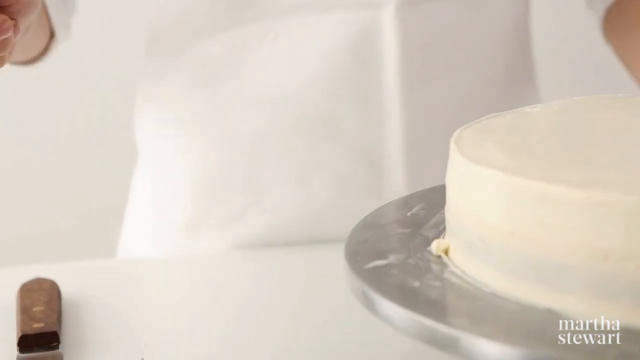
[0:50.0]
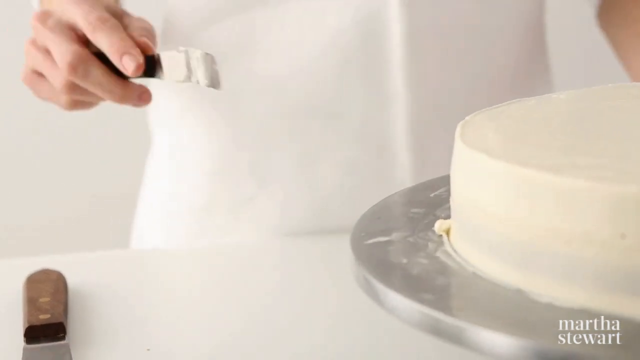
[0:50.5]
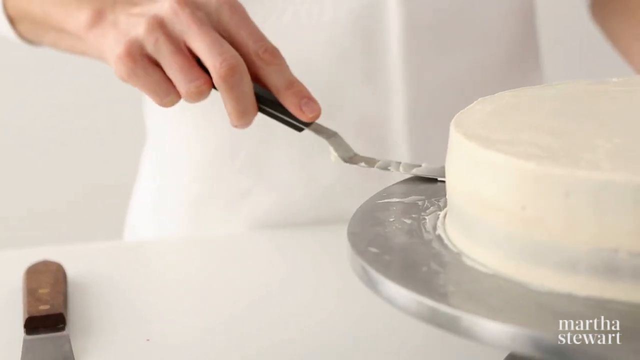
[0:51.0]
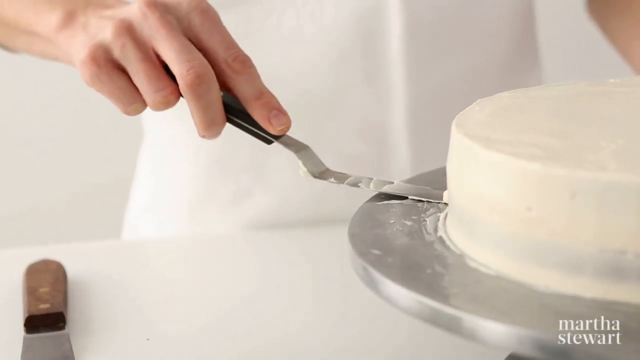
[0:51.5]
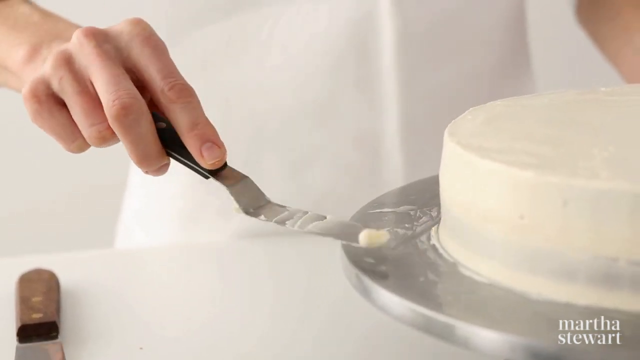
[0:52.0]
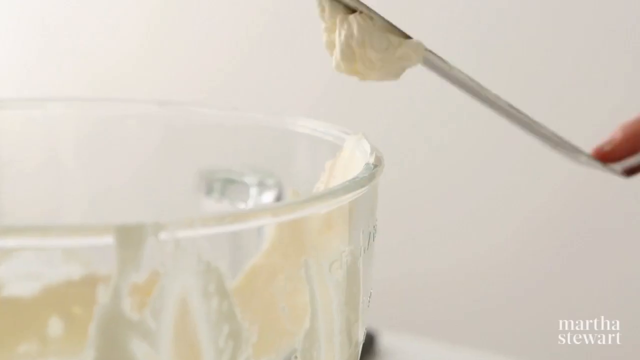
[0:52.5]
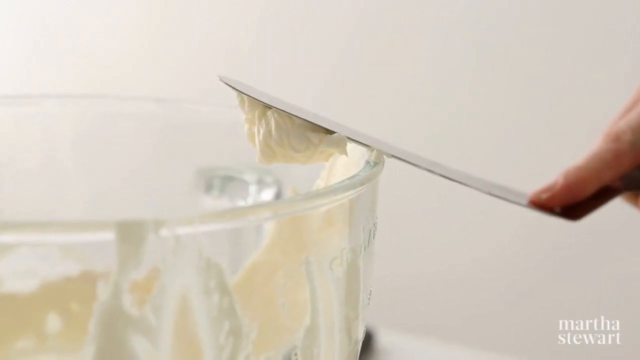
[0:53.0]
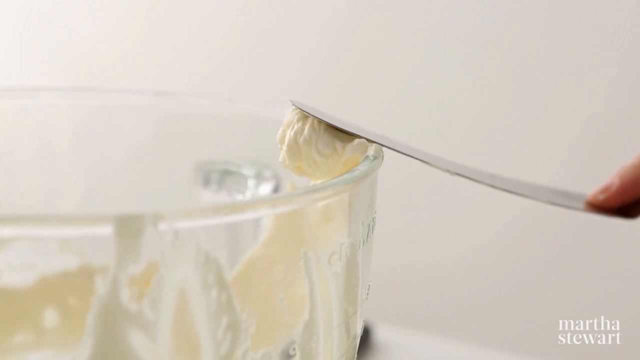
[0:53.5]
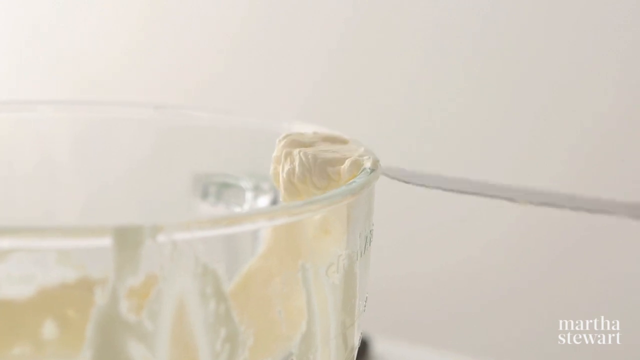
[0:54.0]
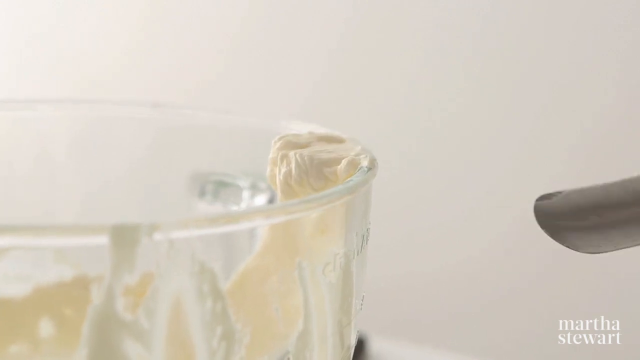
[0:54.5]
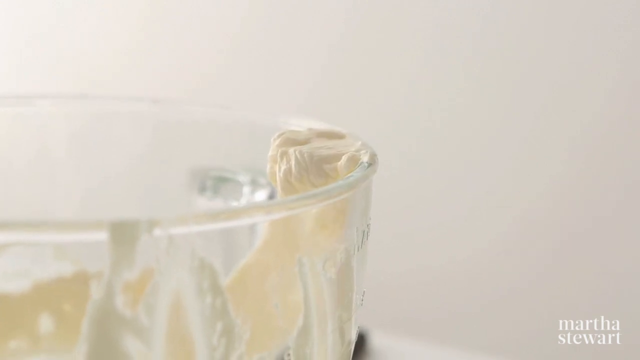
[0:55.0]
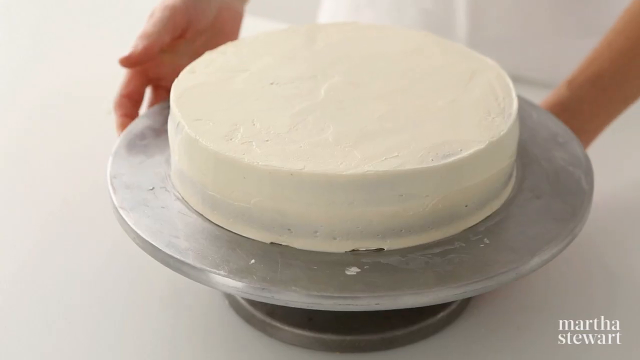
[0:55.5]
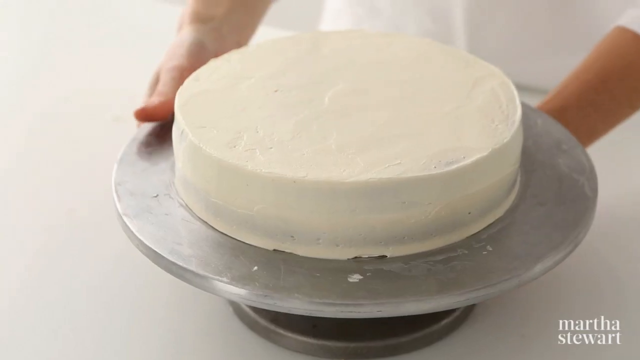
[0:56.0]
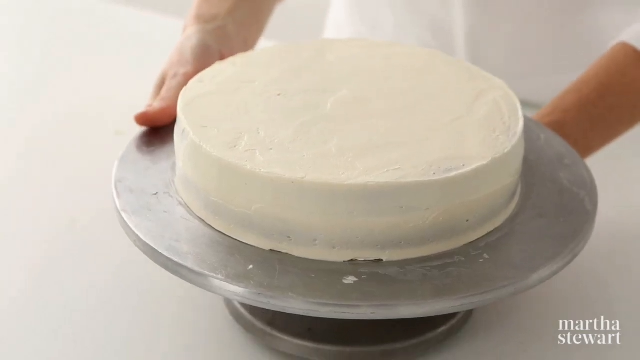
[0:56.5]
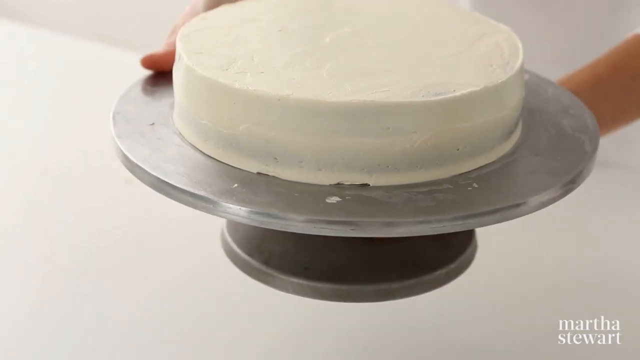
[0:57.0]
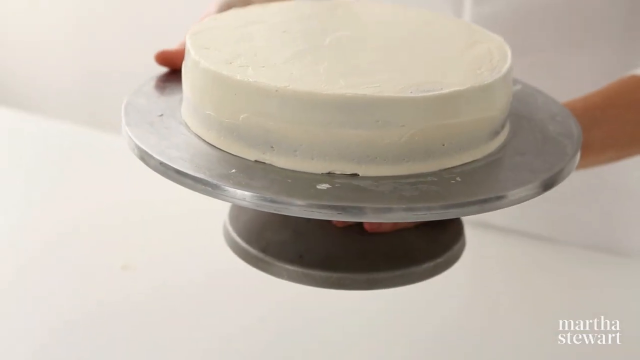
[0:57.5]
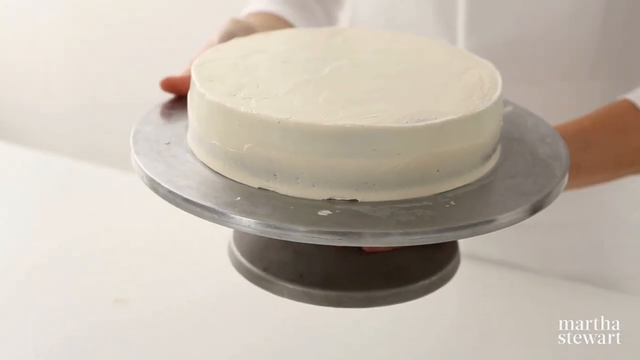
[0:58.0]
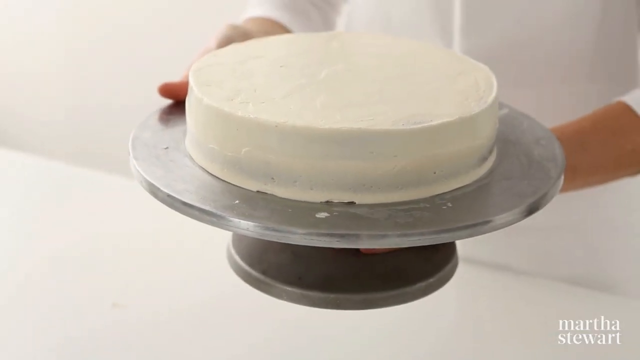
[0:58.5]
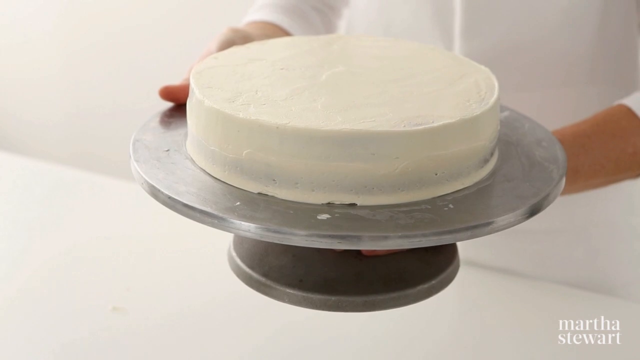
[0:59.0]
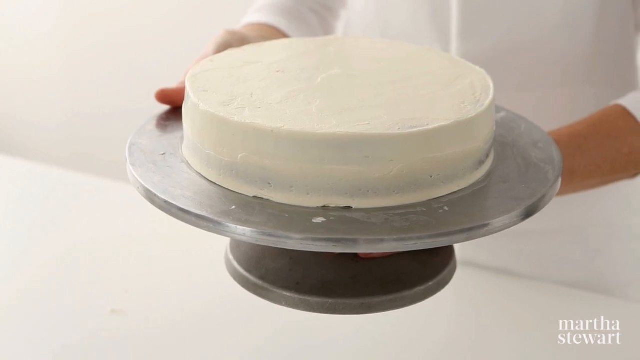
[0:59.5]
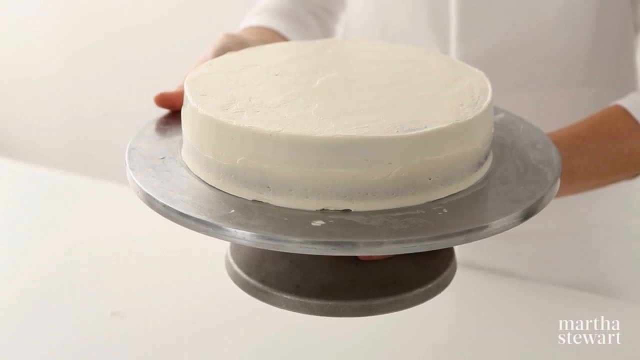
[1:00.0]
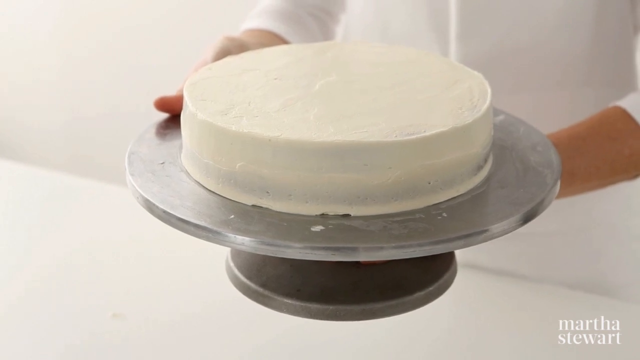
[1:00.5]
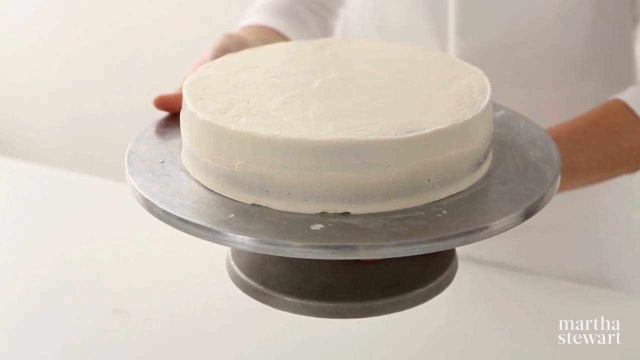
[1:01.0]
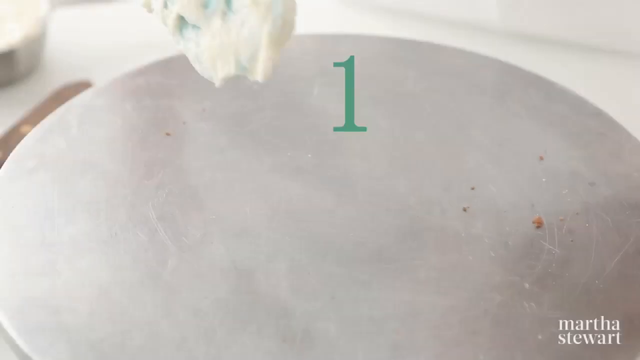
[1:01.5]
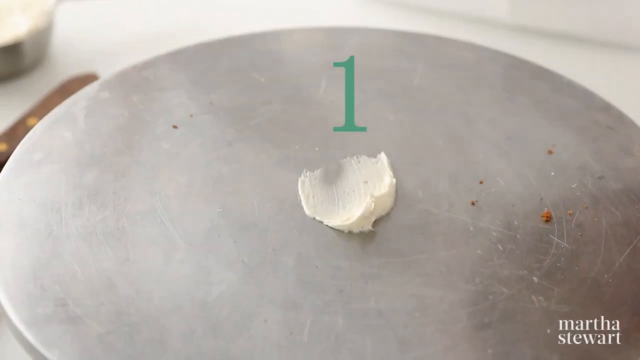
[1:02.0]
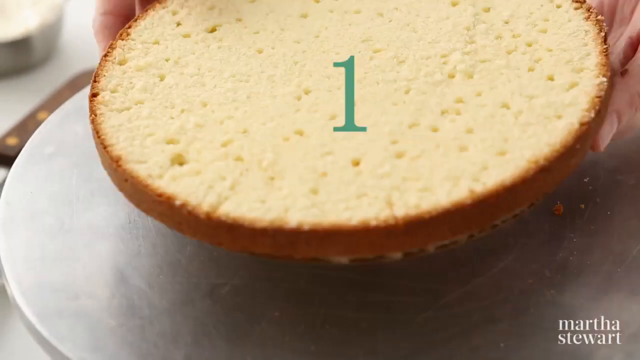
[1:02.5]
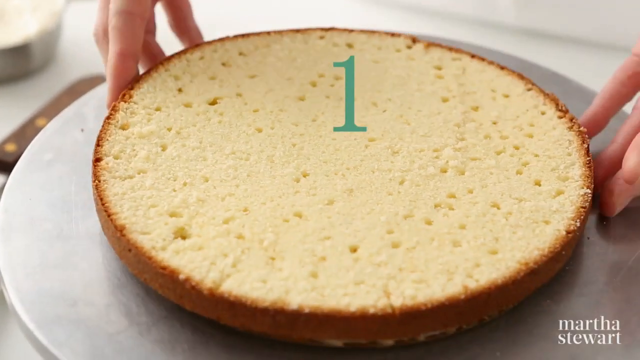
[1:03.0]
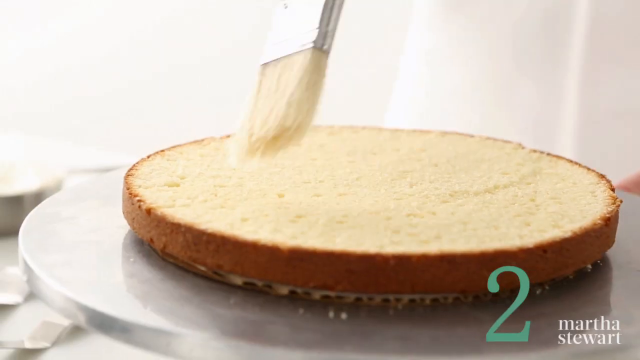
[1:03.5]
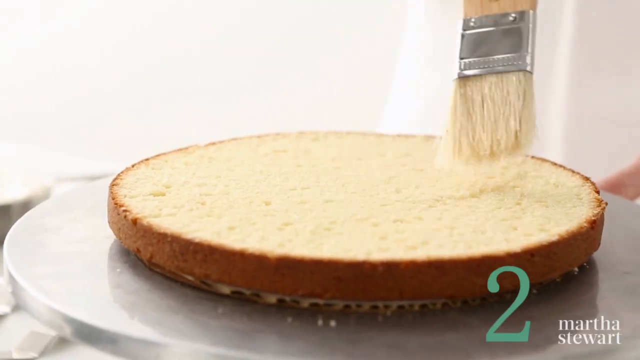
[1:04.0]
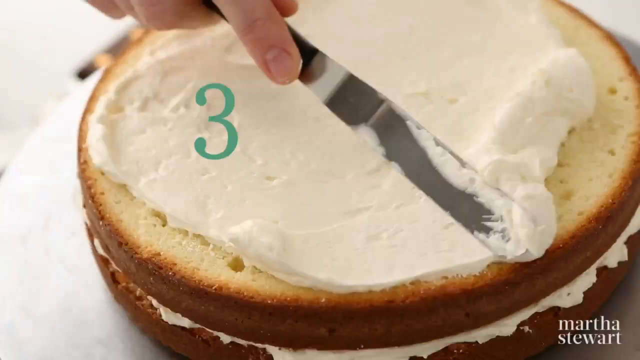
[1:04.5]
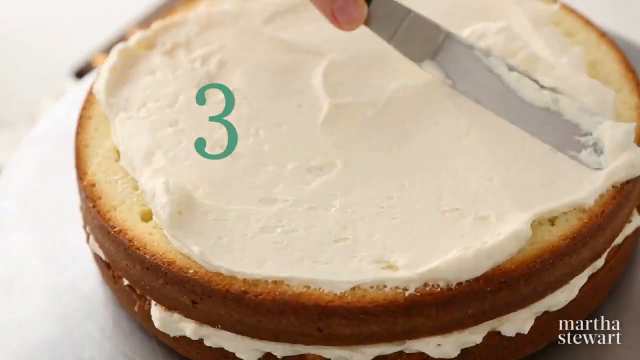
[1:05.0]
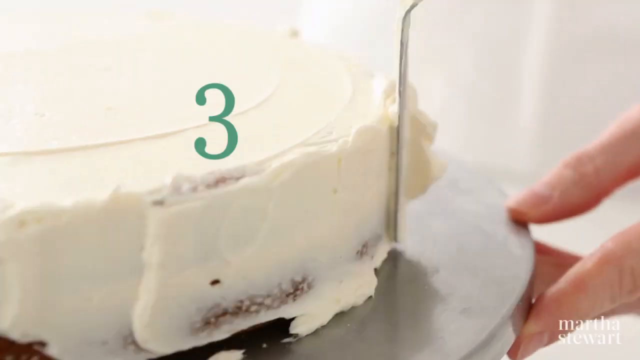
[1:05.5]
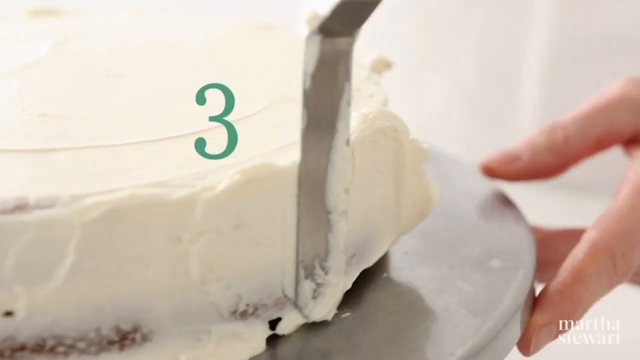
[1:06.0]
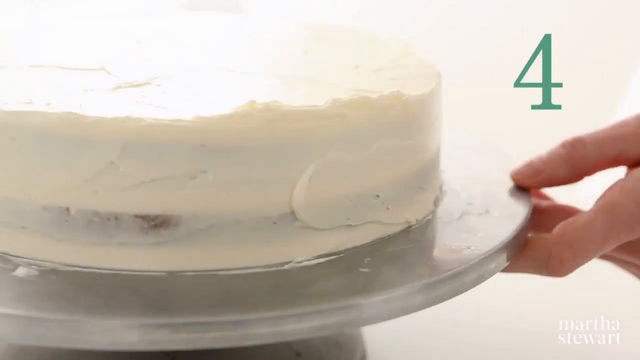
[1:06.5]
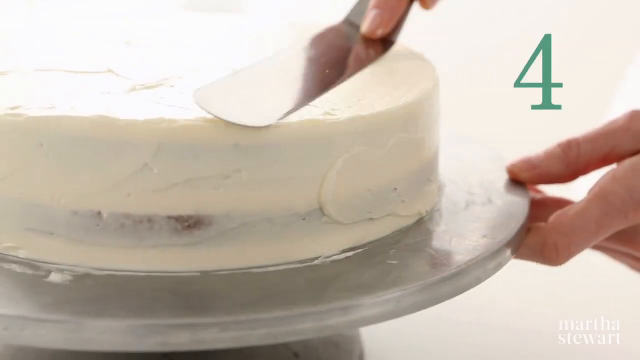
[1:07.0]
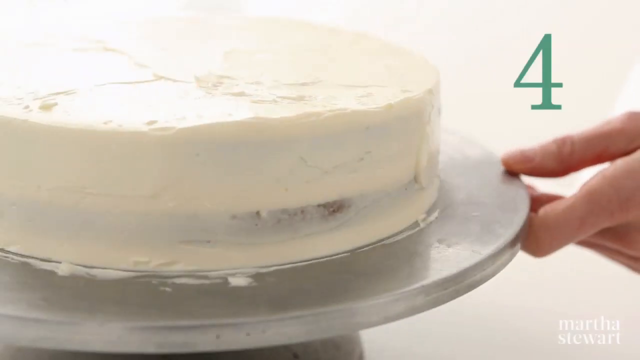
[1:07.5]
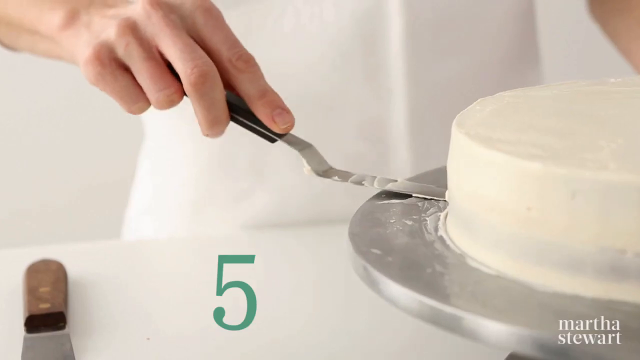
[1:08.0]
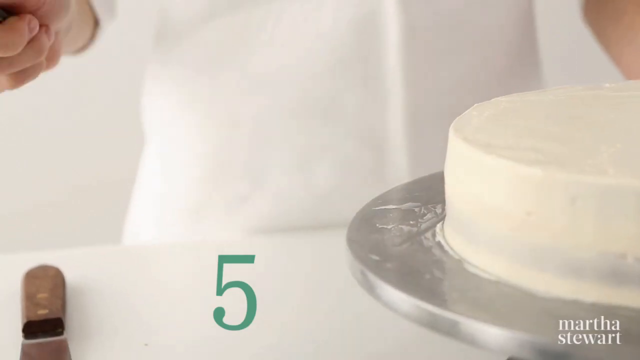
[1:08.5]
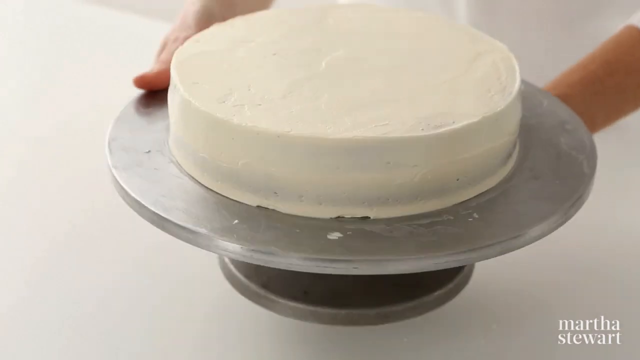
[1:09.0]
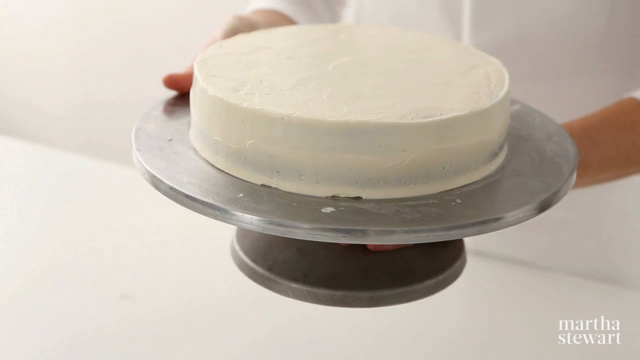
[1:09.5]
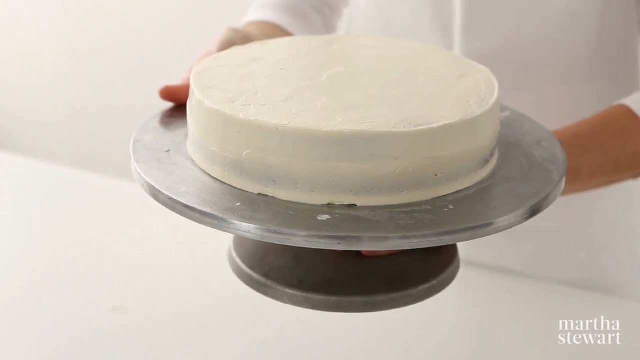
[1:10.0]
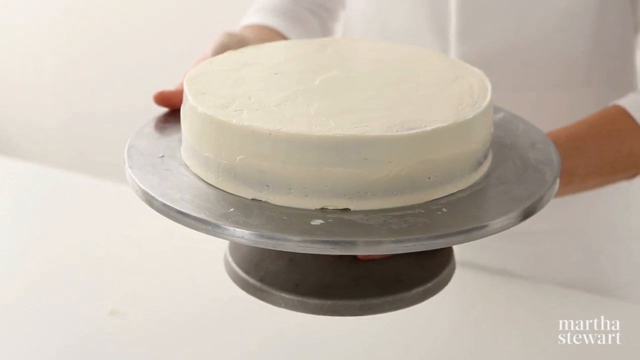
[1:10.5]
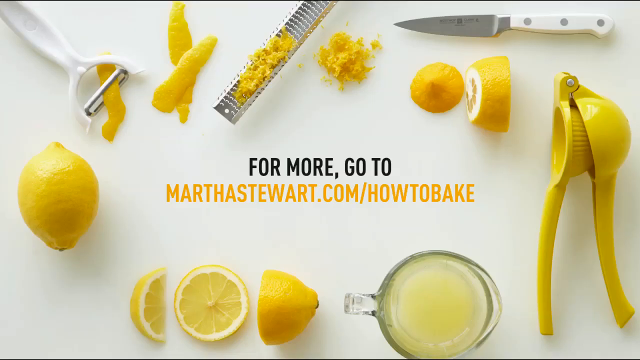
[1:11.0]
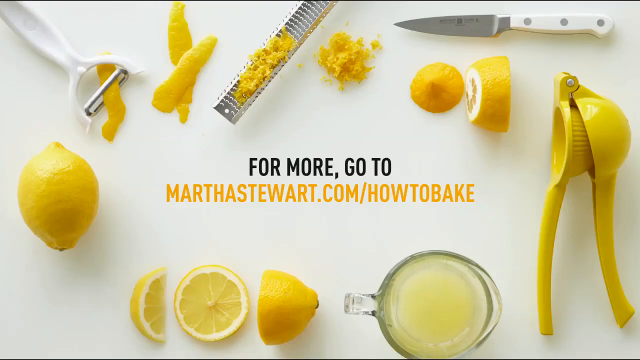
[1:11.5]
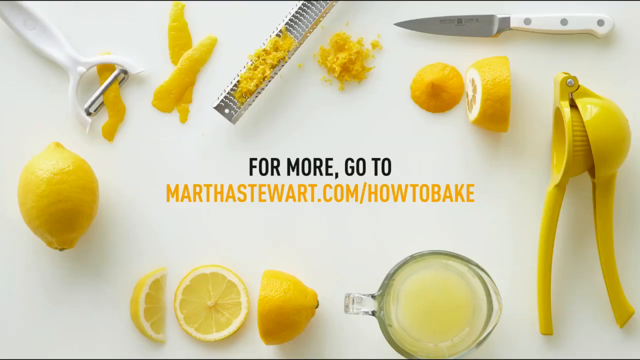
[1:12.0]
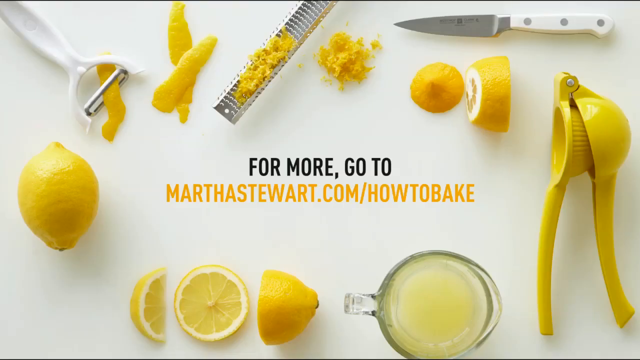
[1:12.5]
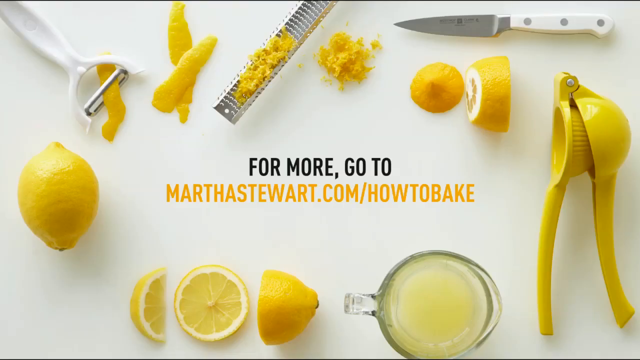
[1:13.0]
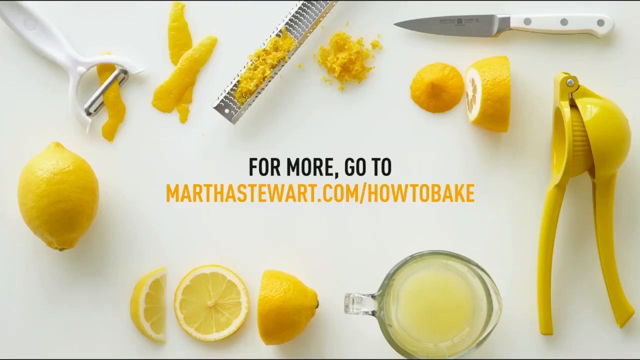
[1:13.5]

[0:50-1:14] The two layers of cake have been finely coated, and the baker, wearing a white apron, carefully takes off the excess icing and places it back into the icing bowl. The cake is evenly coated with icing all around. The baker lifts the cake and shows it to the camera. A recap of how the cake was iced follows. "Step 1" appears in green as a dollop of icing is placed onto the silver surface and a slice of cake is placed on it. In step 3, another slice is placed on top and more icing is added, not only on the top but also on the sides. In step 4, the baker evens out the rough surfaces of the icing on the cake. In step 5, the baker clears off excess icing and puts it back into the glass icing bowl. The baker then lifts the cake. At the end of the video, a picture shows lemons and different utensils: a lemon squeezer, a jar full of lemon, a cut-up lemon, a peeler, a zester and a white knife. In the middle of them is text that says "For more, go to MarthaStewarts.com /howtobake".